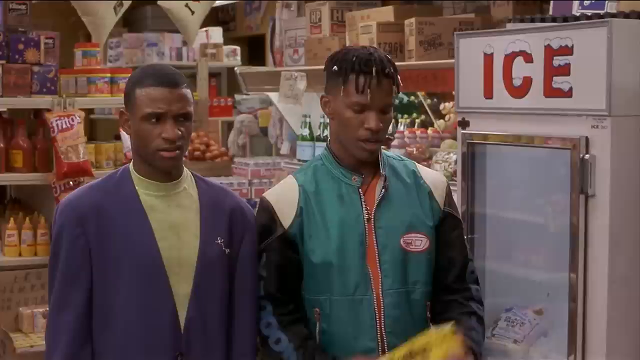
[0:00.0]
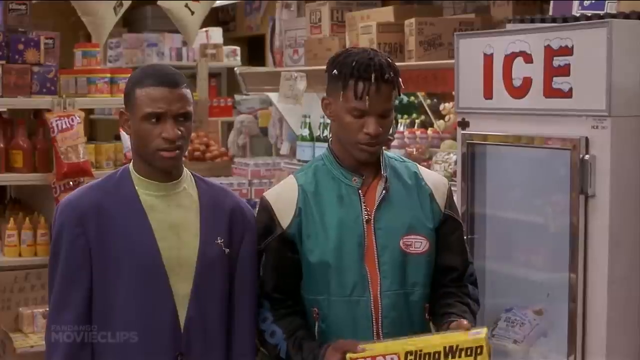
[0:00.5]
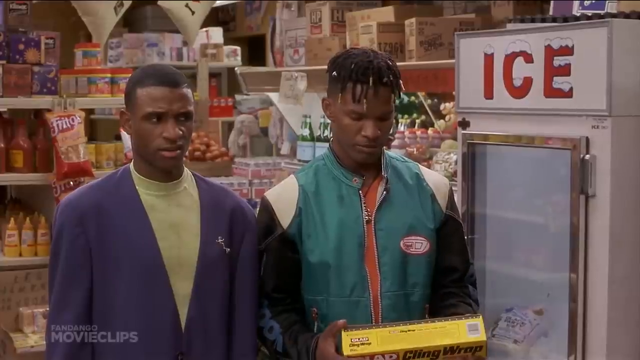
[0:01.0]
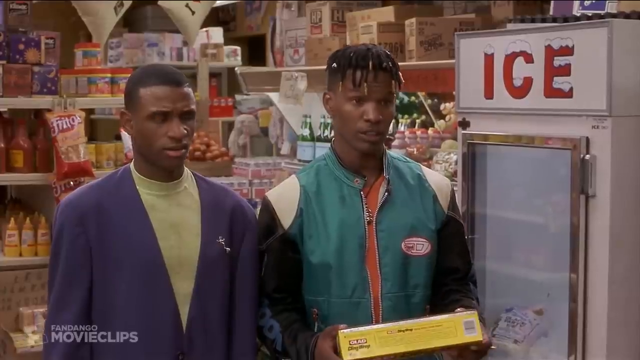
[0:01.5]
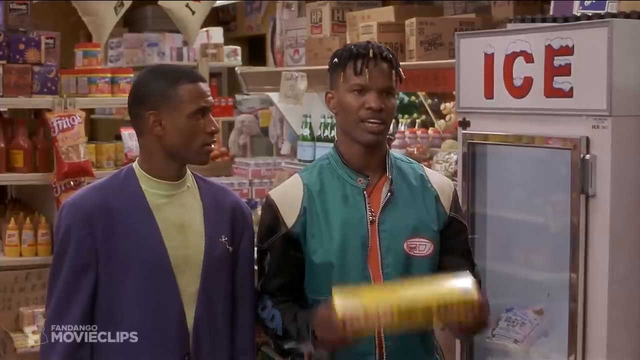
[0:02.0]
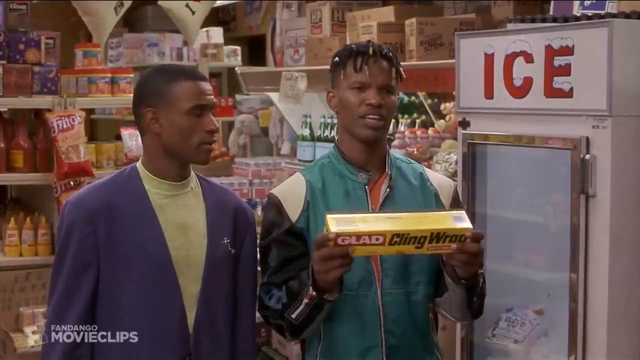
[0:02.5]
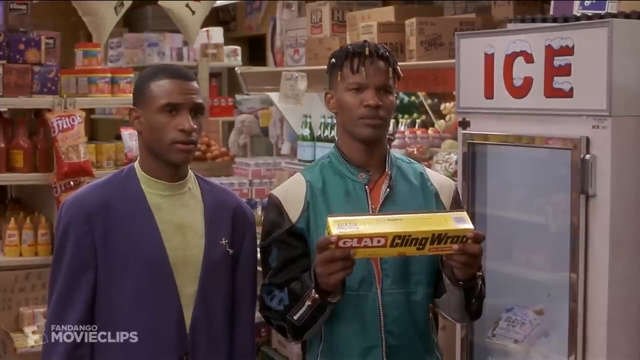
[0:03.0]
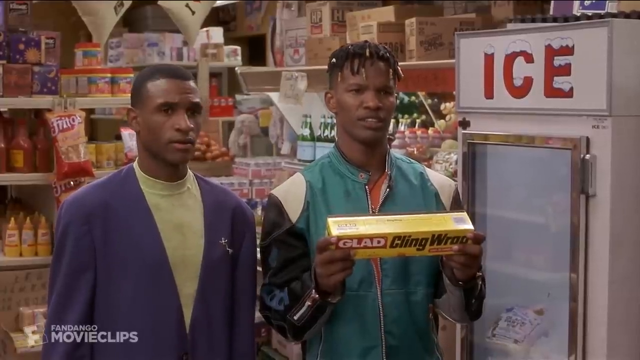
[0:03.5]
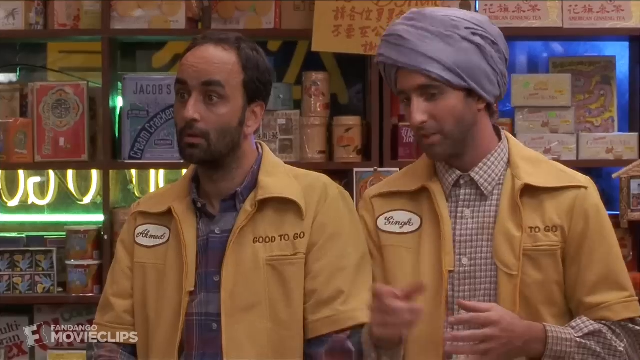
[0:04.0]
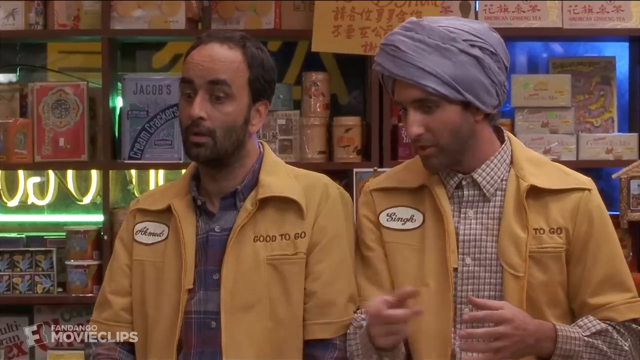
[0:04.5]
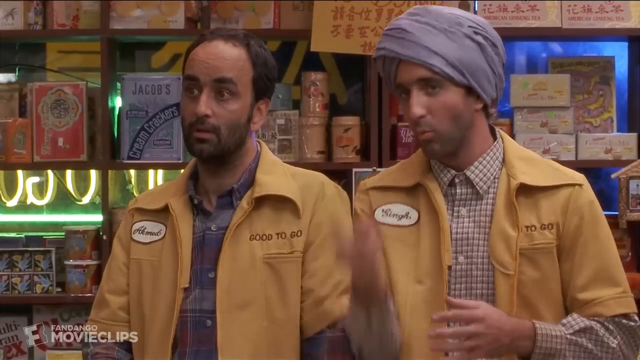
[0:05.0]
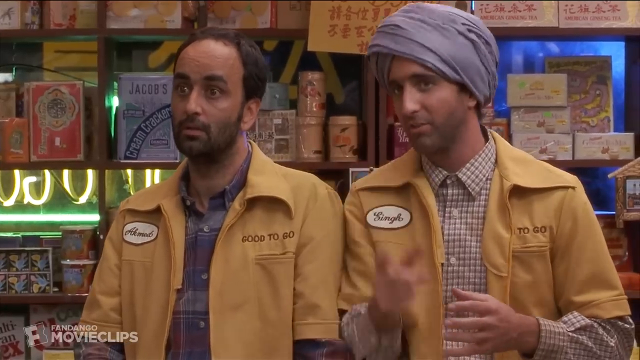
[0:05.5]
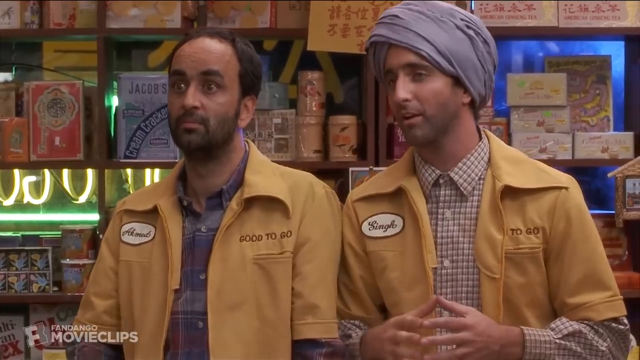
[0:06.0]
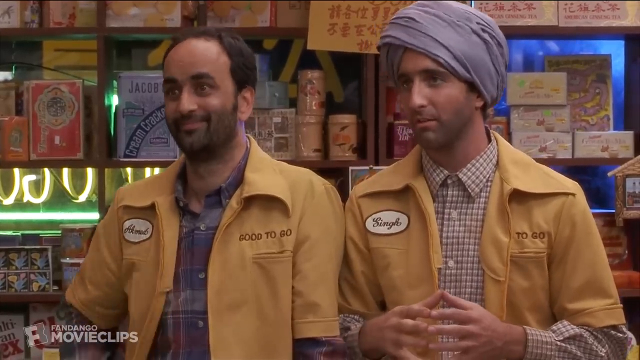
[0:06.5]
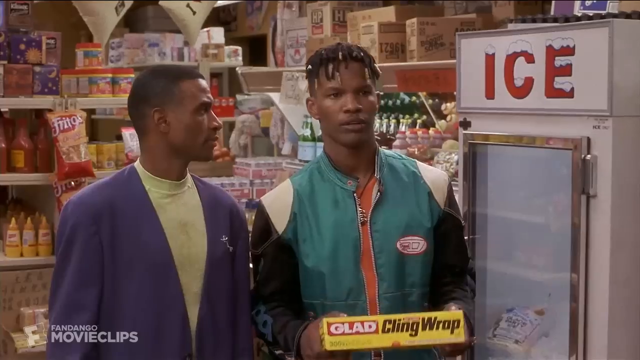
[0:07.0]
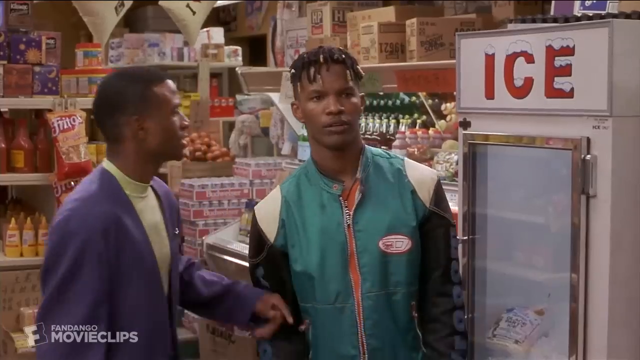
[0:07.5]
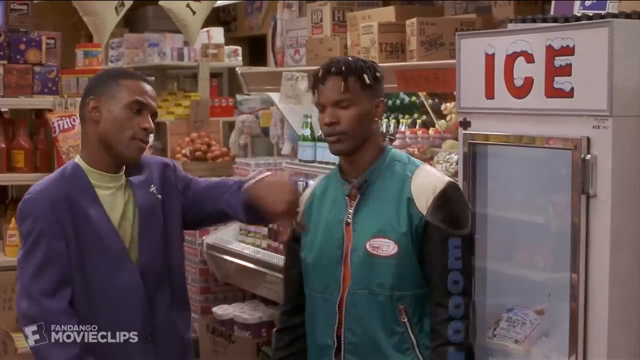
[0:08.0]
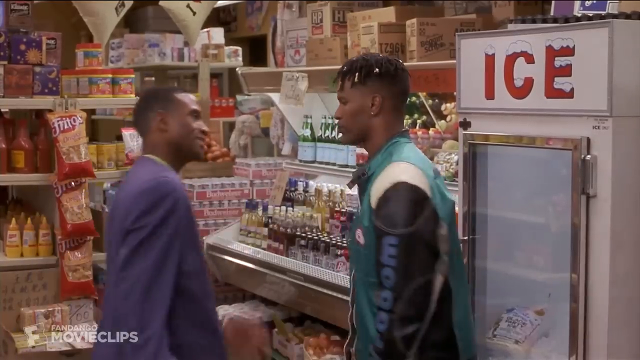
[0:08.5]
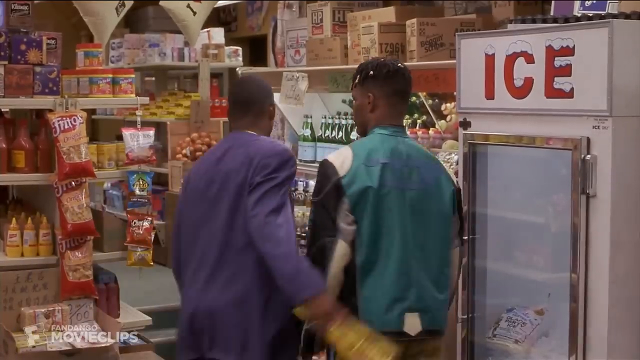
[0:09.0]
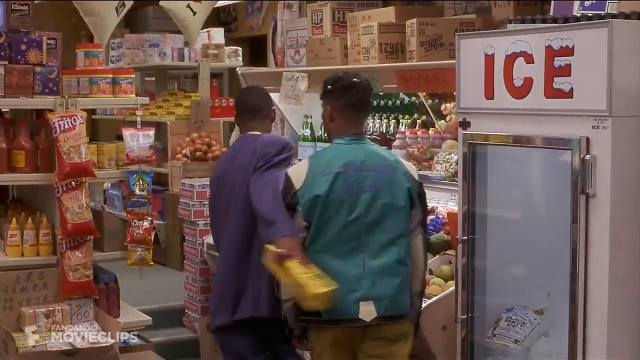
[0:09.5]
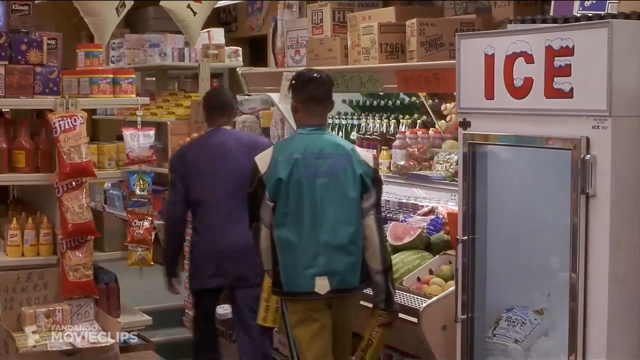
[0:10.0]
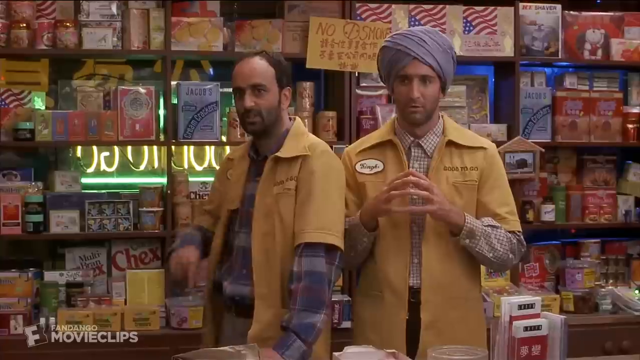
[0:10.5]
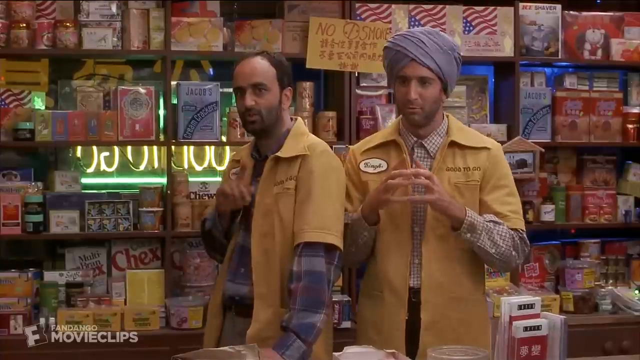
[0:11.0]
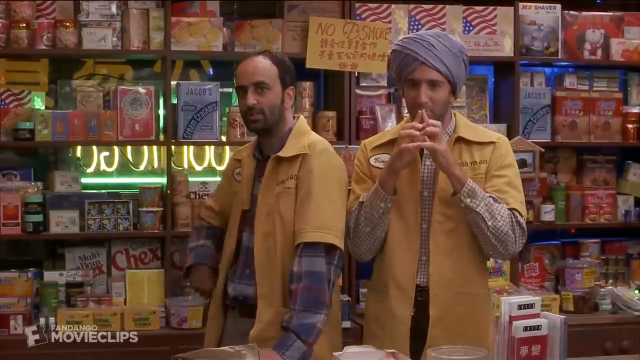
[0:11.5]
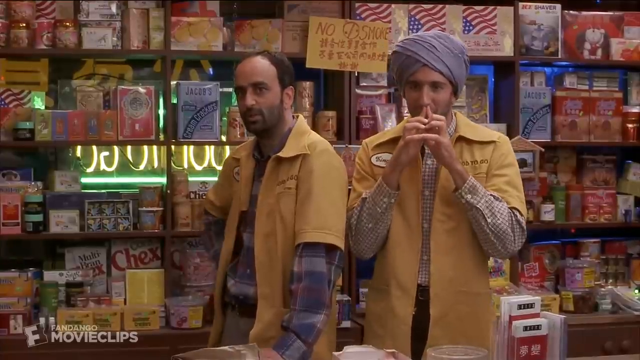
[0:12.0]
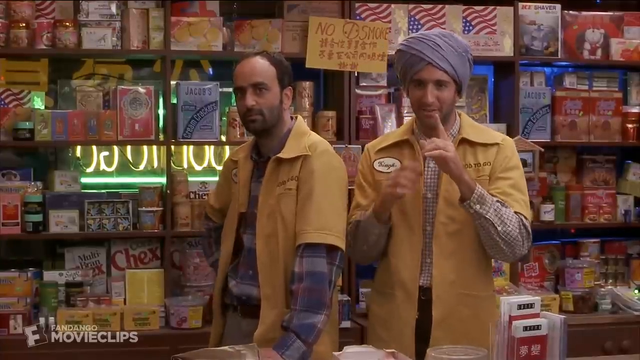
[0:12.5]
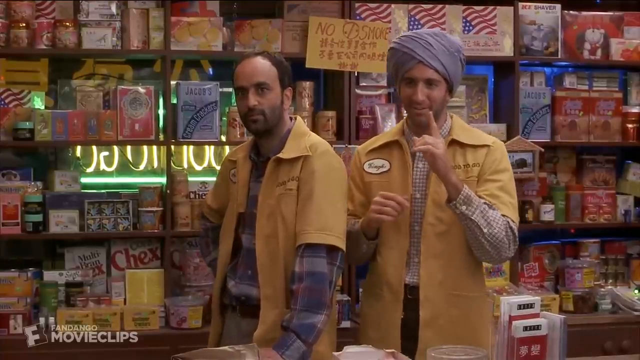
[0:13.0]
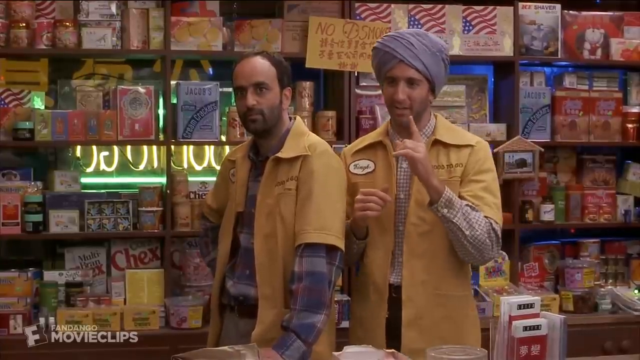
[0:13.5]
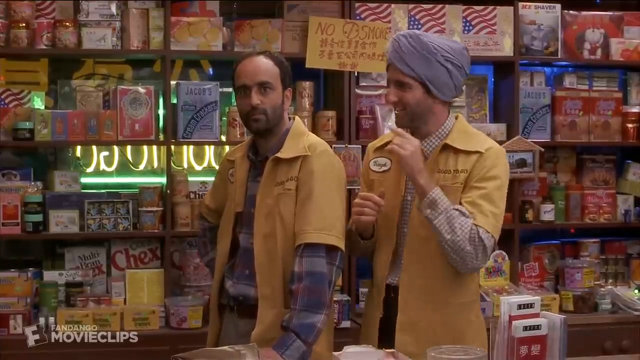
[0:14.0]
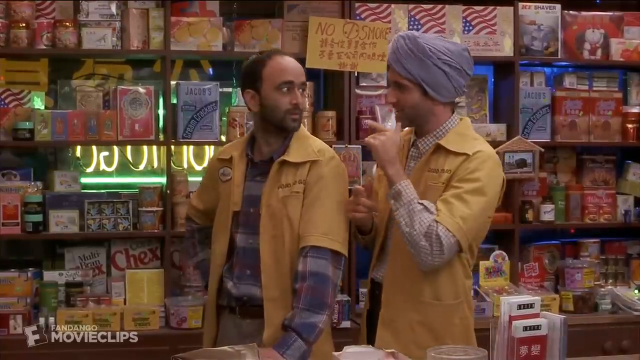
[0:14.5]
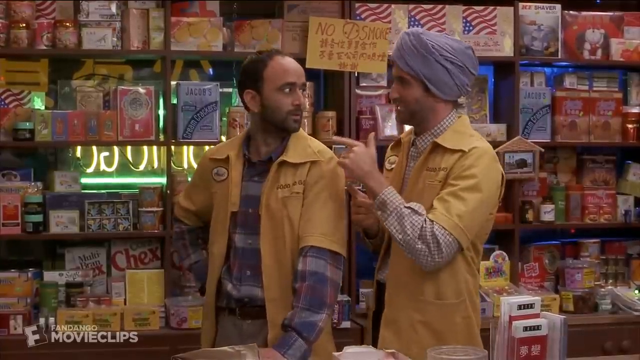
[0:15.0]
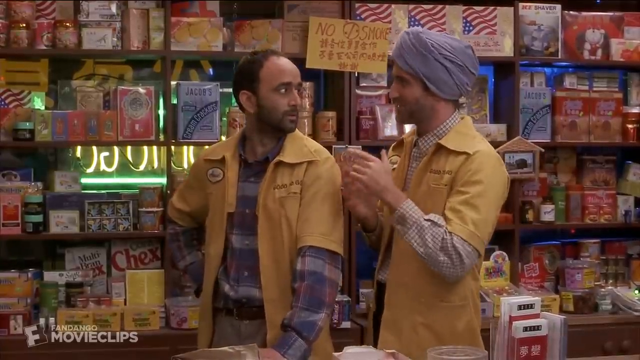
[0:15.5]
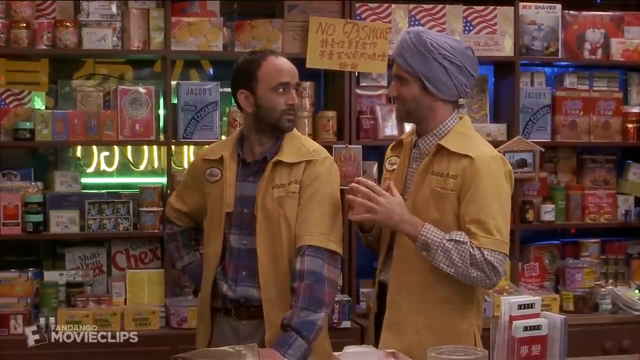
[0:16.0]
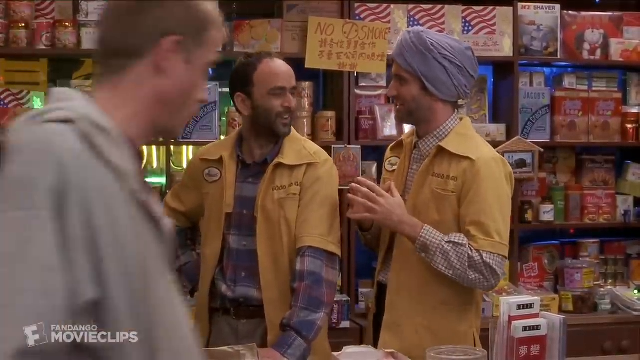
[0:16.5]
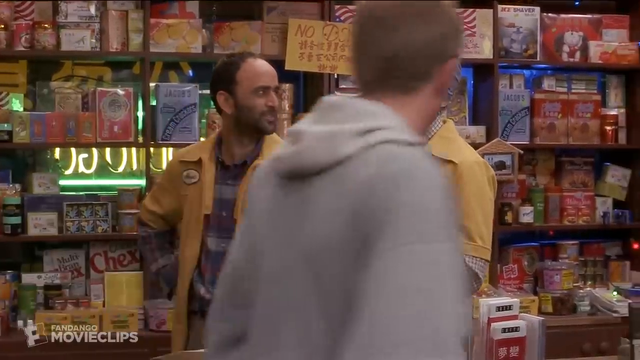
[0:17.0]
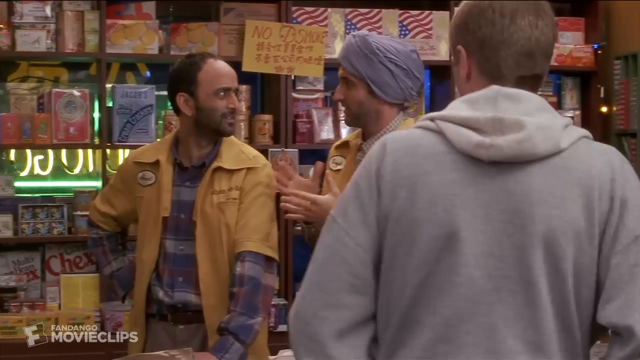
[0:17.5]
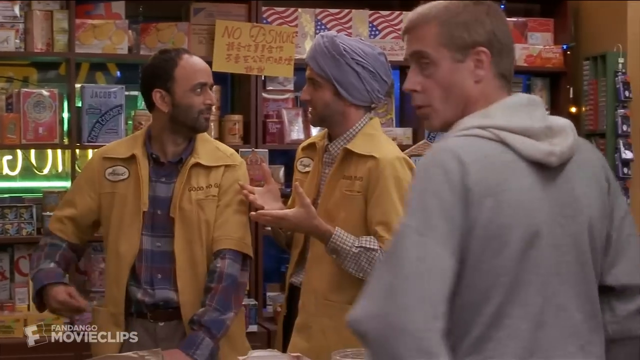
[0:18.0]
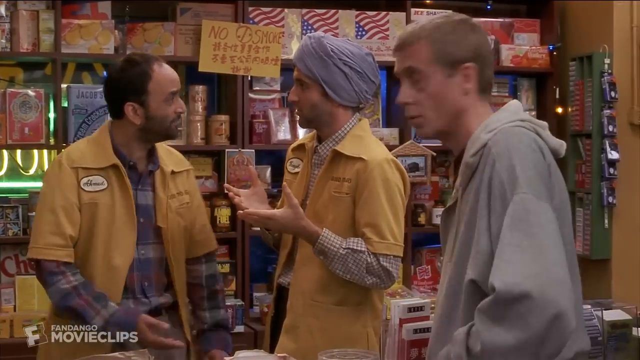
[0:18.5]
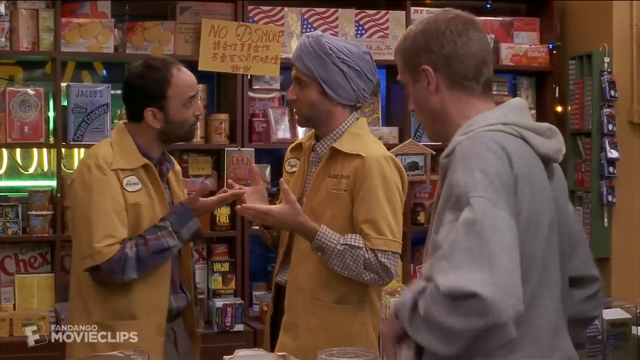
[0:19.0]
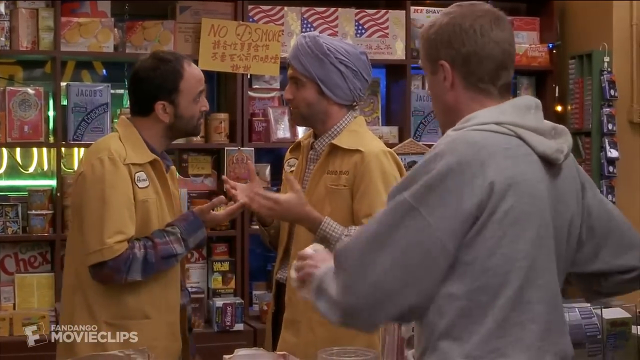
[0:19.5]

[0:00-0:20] A man wears a blue, white and black leather jacket with a sticker on it, over an orange t-shirt. The other man wears a purple suit and a t-shirt that looks greenish; he has short hair and looks confused. They stand right at a sign showing ice, inside a shop, and at the back is everything the shop sells. The two look a little off or concerned about something, yet they also seem to be having fun. They are communicating with someone, possibly buying from two Indian men who appear to be the owners of the goods.